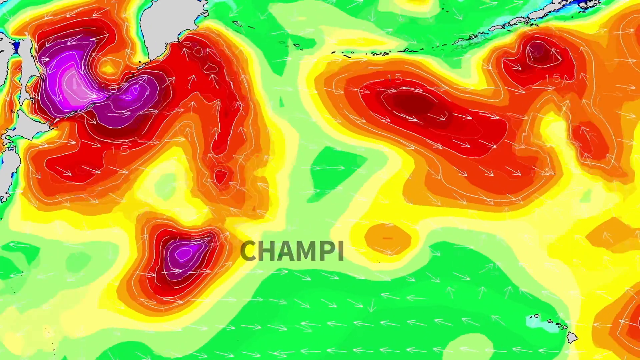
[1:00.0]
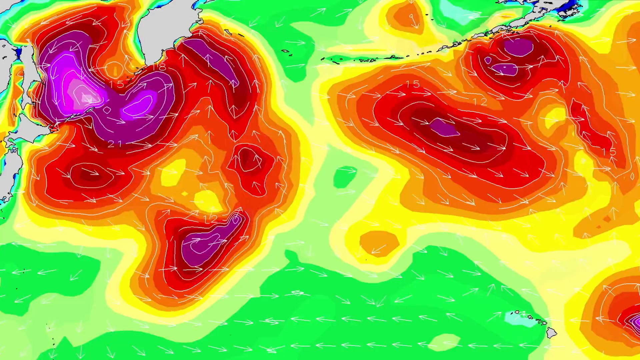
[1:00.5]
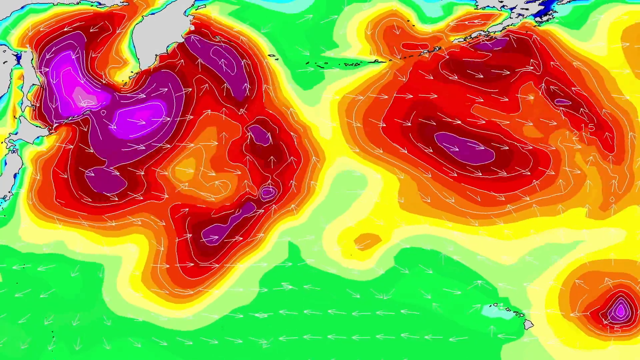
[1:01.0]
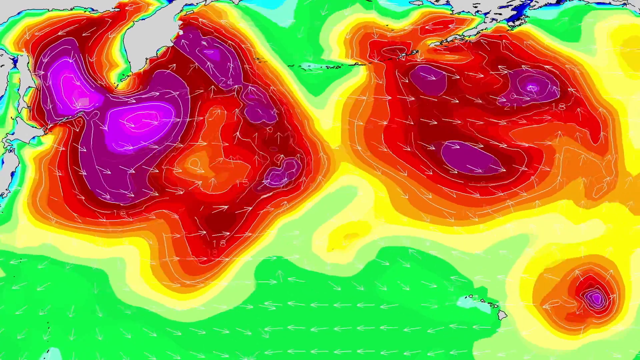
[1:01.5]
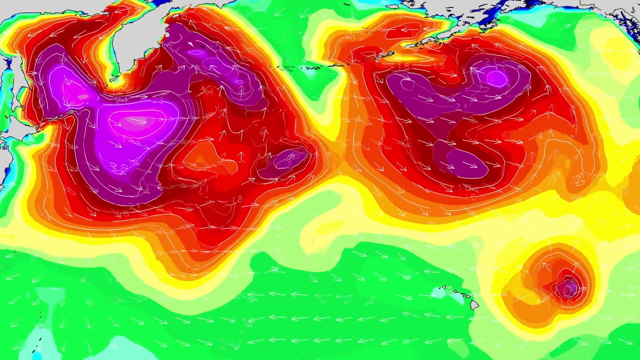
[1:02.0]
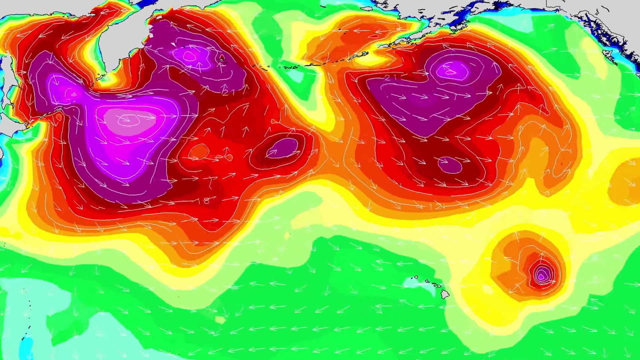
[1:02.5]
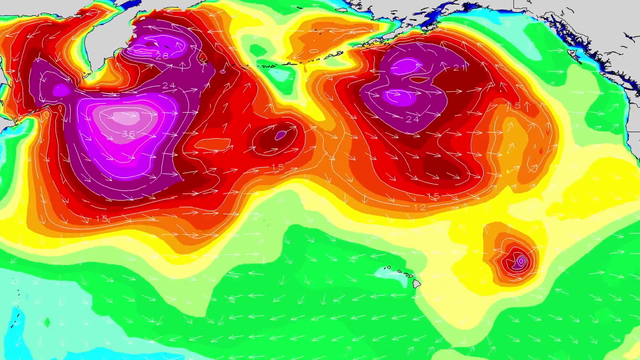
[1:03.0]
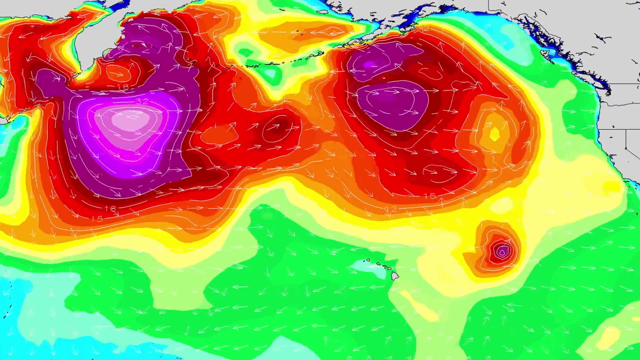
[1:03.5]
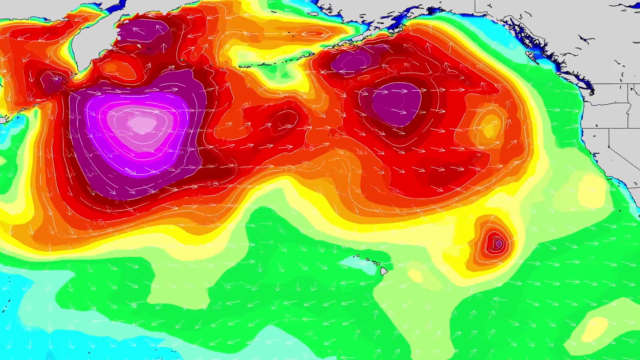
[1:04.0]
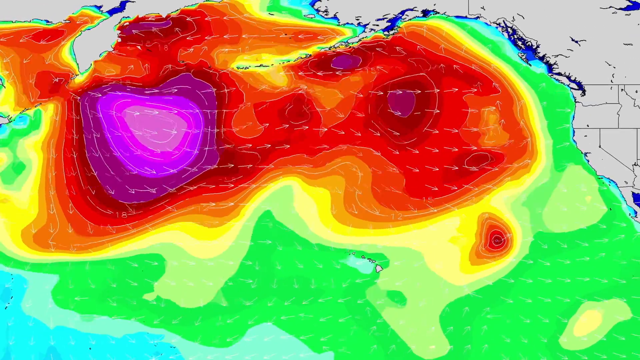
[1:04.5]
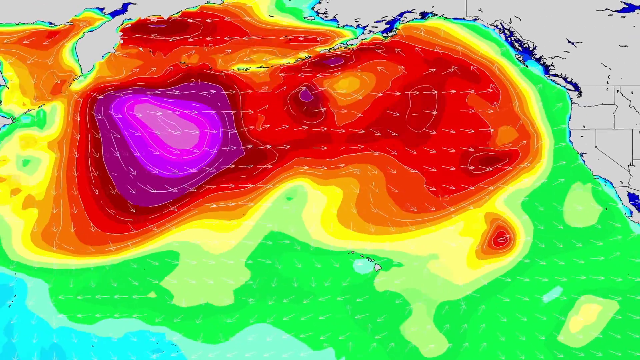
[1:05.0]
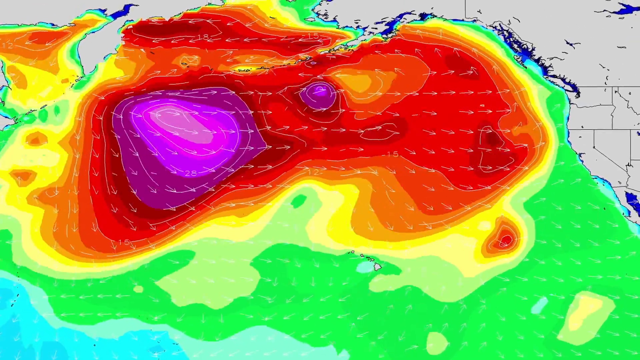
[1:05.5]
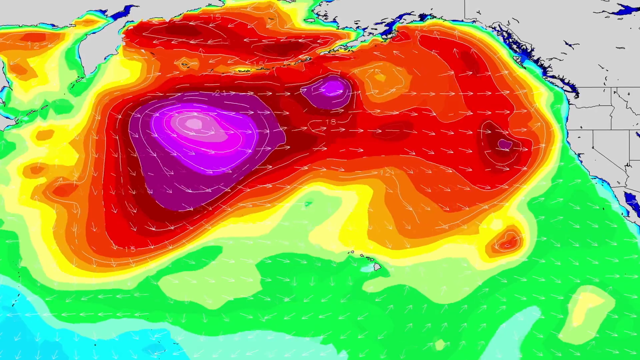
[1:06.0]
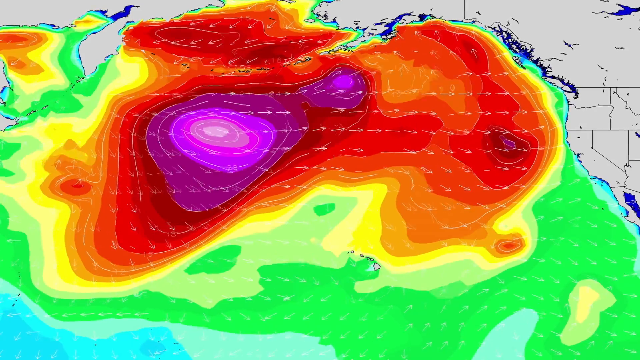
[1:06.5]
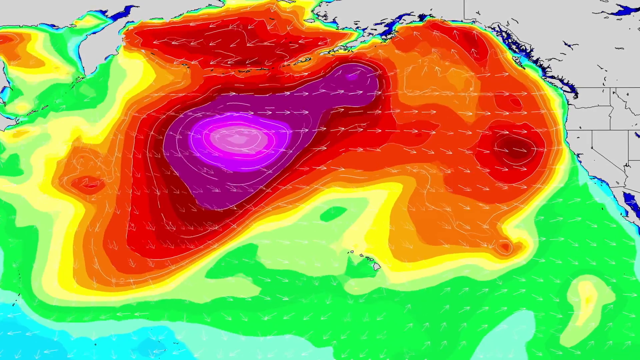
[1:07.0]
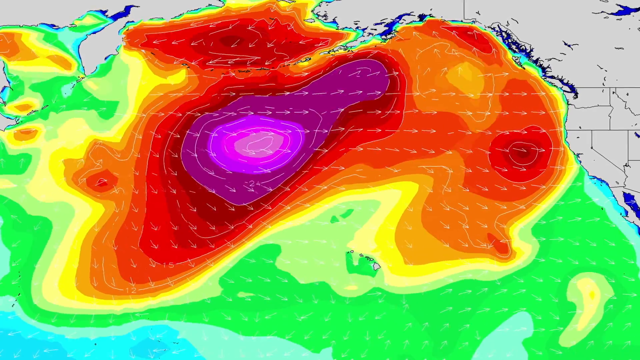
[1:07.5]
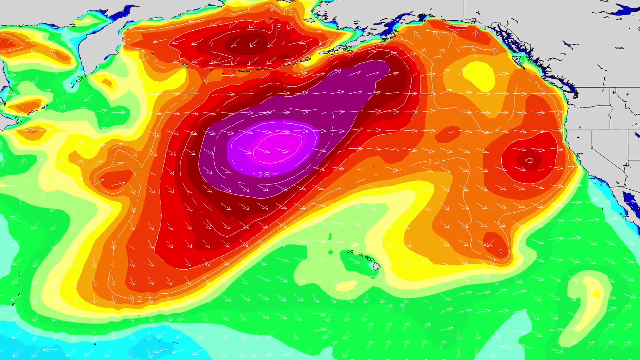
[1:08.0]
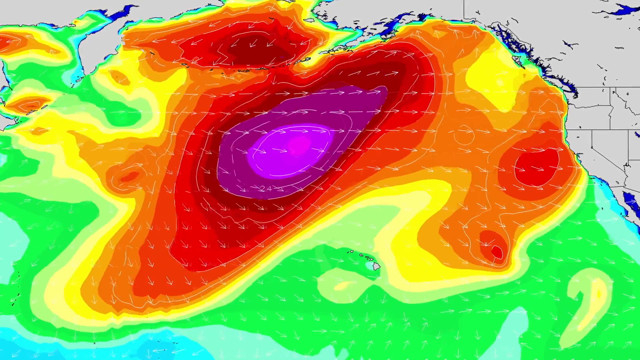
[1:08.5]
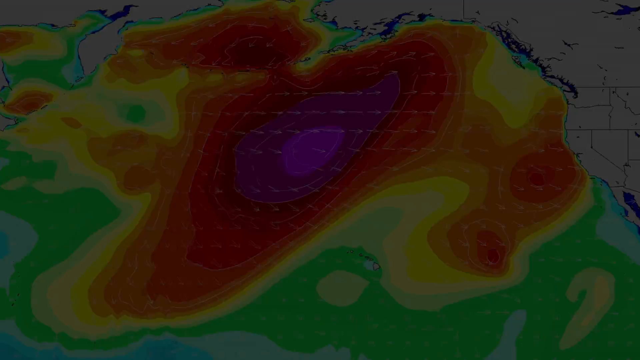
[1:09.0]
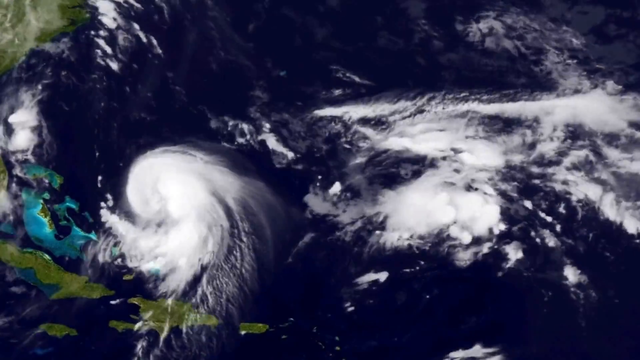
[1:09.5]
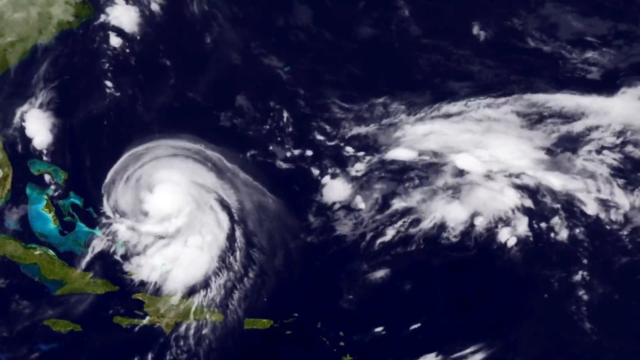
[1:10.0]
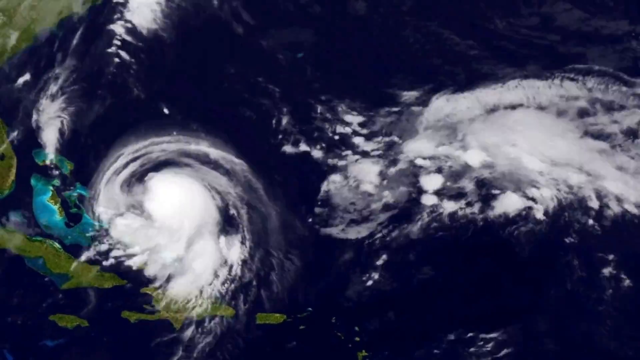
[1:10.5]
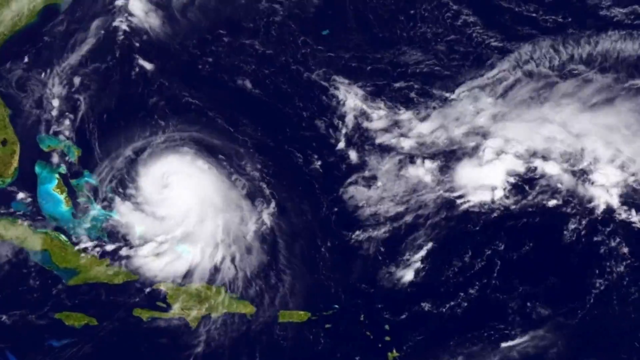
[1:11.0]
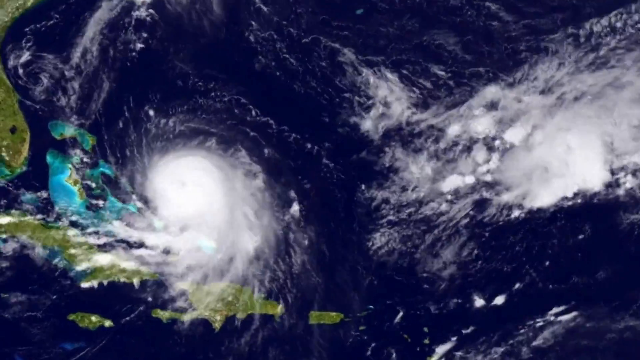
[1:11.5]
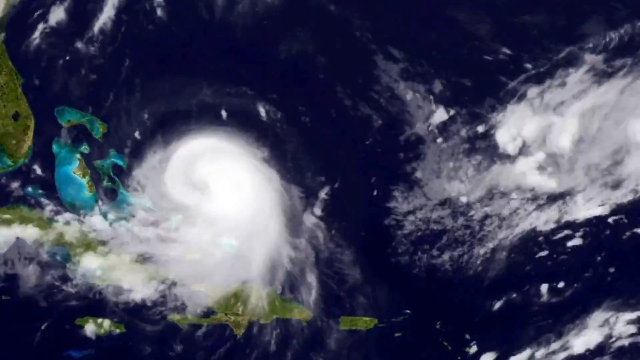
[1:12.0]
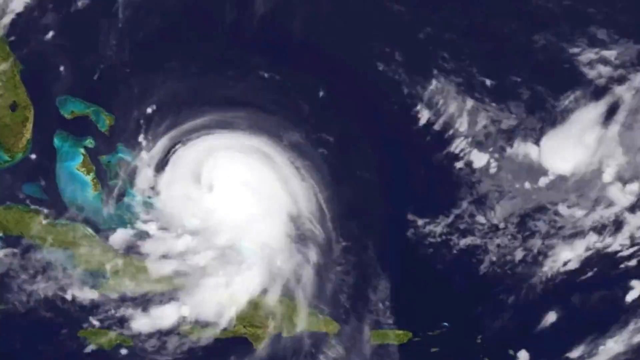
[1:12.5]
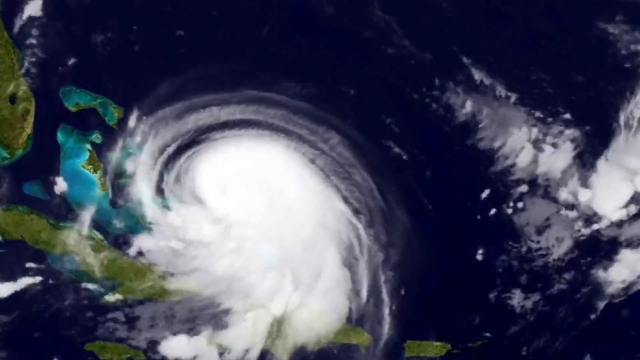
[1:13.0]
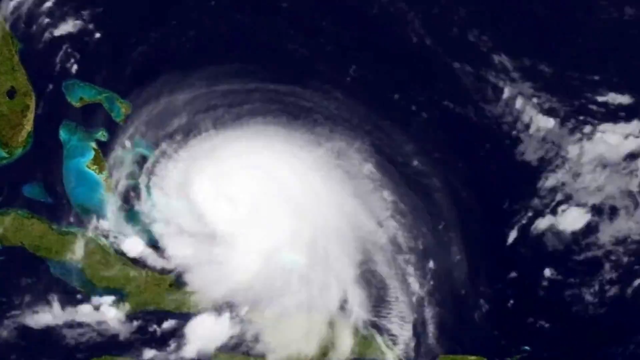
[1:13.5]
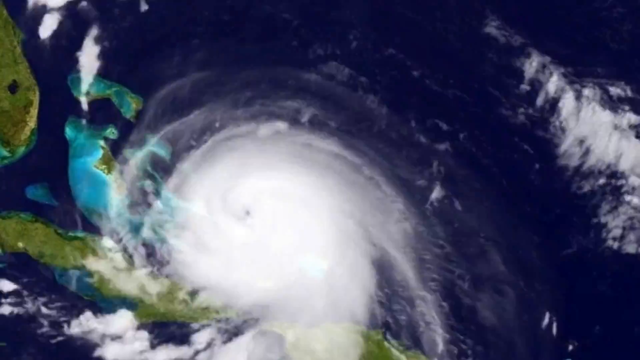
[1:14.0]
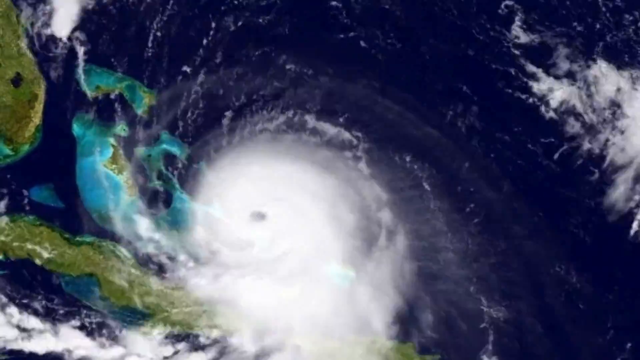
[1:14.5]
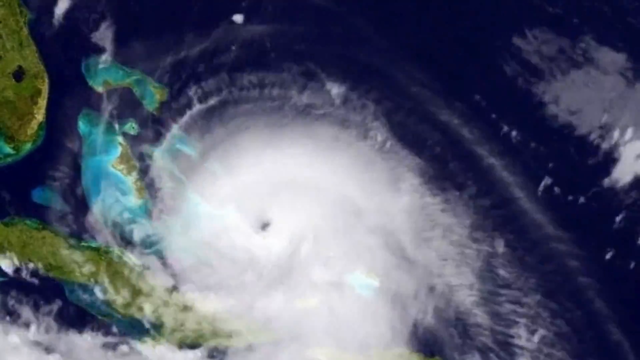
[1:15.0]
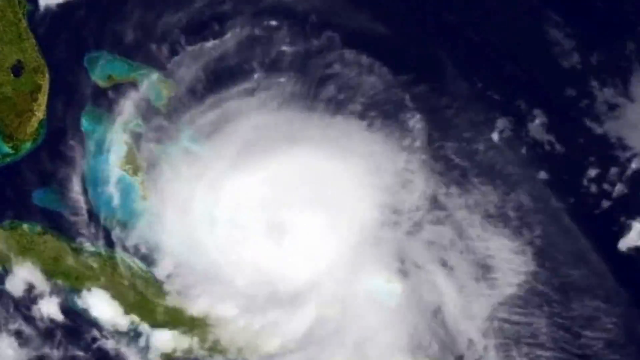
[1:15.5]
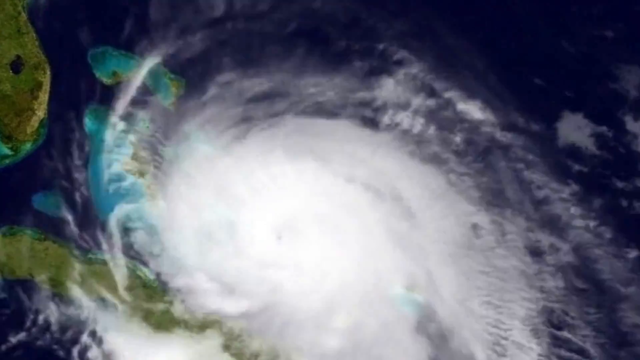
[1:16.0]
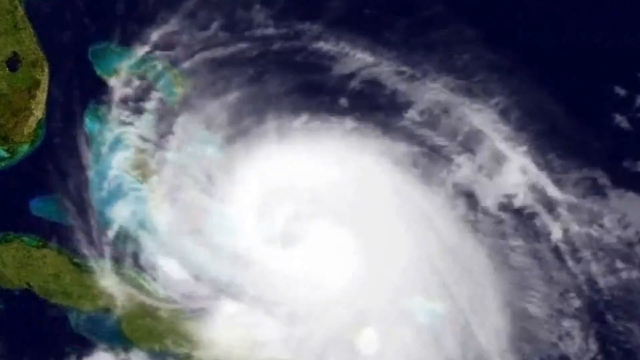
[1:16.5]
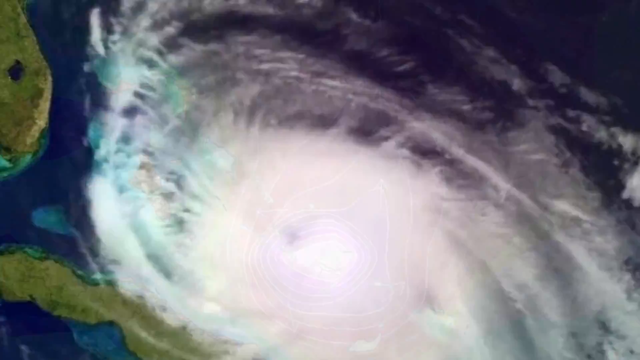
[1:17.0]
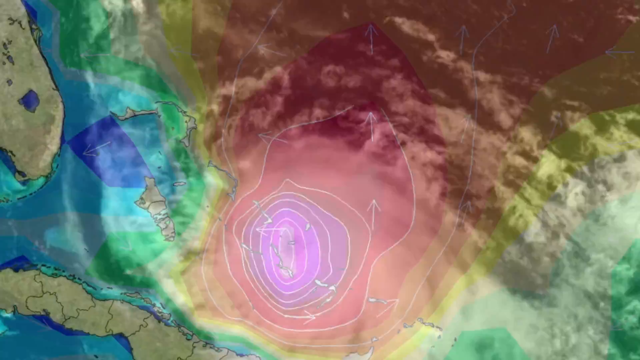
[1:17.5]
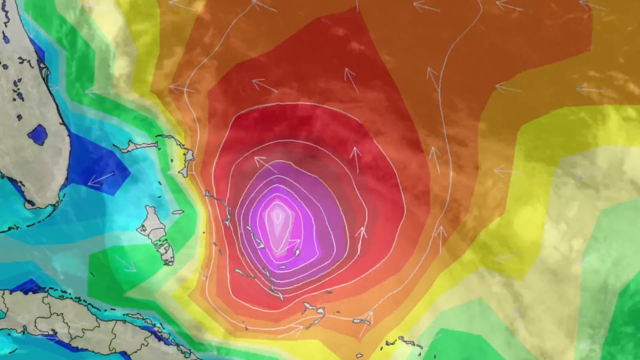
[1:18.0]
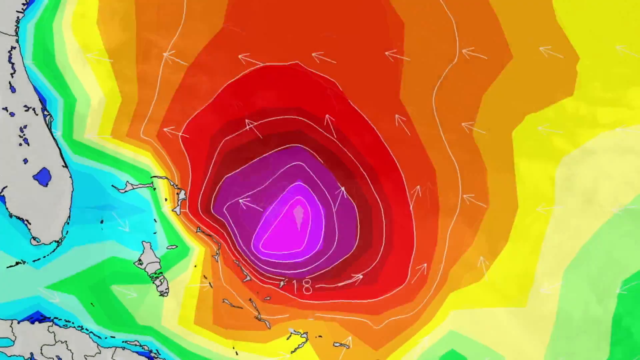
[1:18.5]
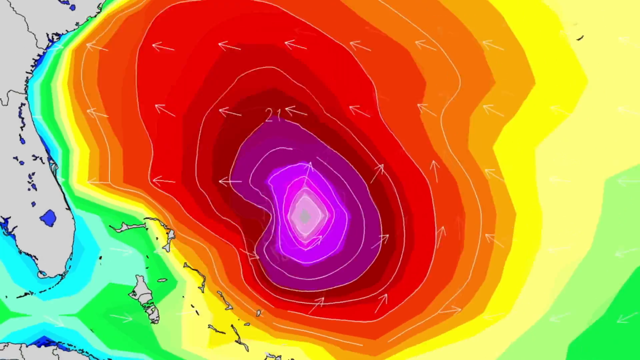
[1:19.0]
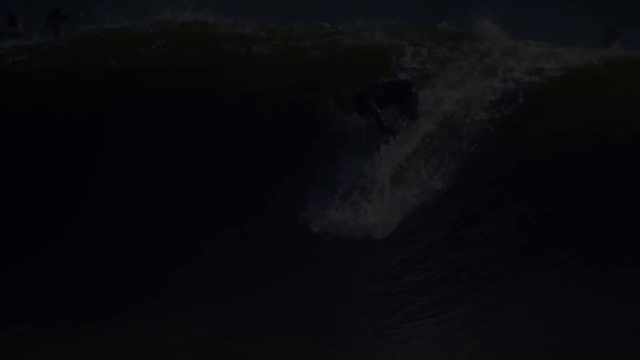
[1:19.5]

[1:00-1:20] Another animation shows what looks like a Doppler radar scenario, focusing on a red blob carrying a big purple and pinkish blob in its middle, apparently the most intense part of the storm. A more realistic view of that pinkish red blob follows, showing something like a typhoon or hurricane swirling around with an eye in the middle. The eye corresponds to the pink part of the radar, while the red and orange are the strong winds going around it. The system moves off to the right the whole time.